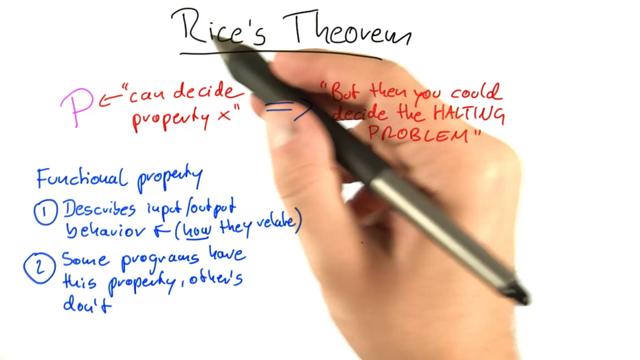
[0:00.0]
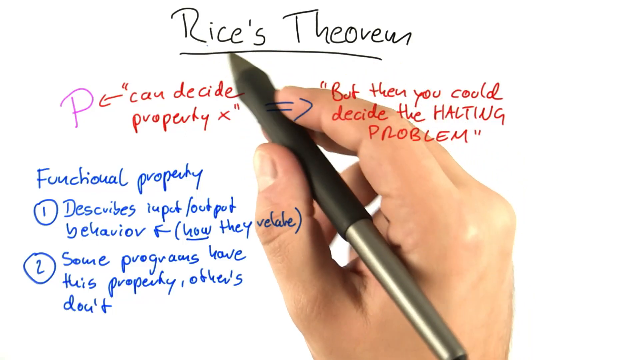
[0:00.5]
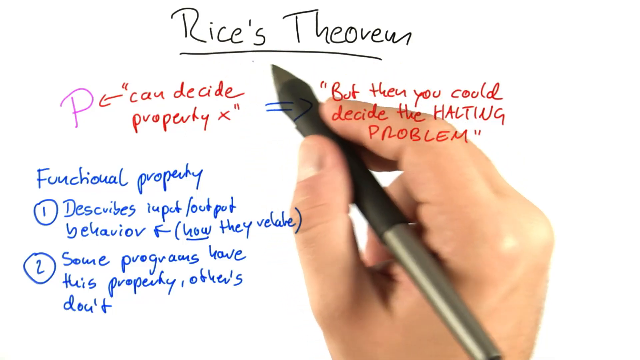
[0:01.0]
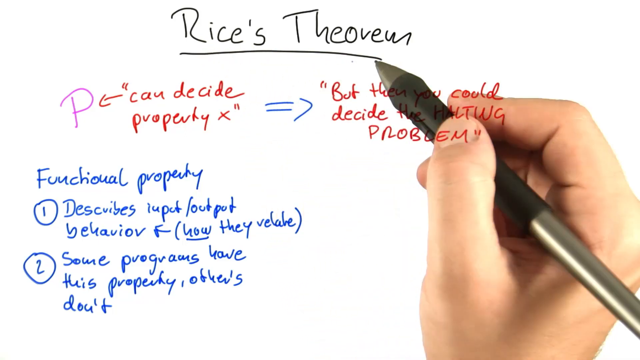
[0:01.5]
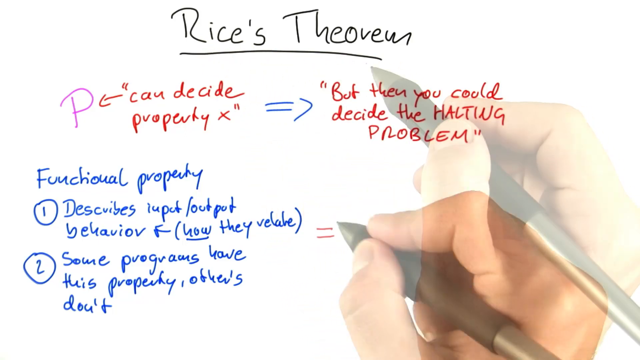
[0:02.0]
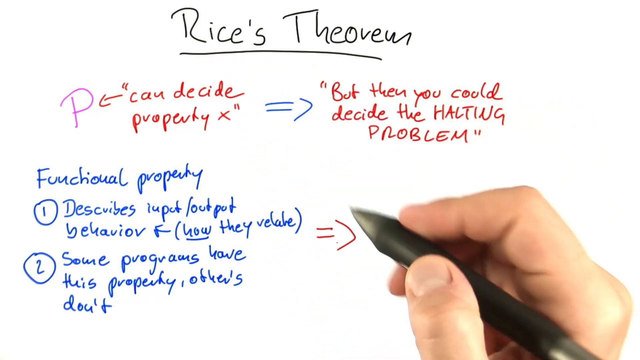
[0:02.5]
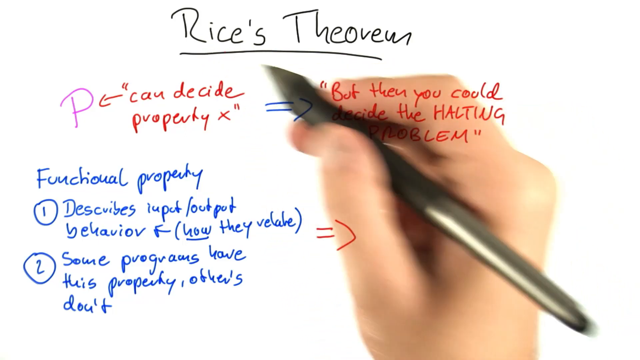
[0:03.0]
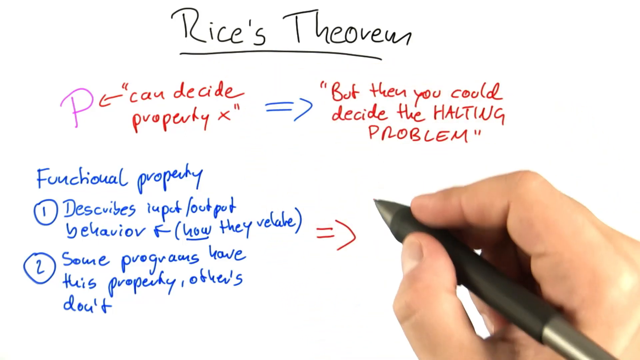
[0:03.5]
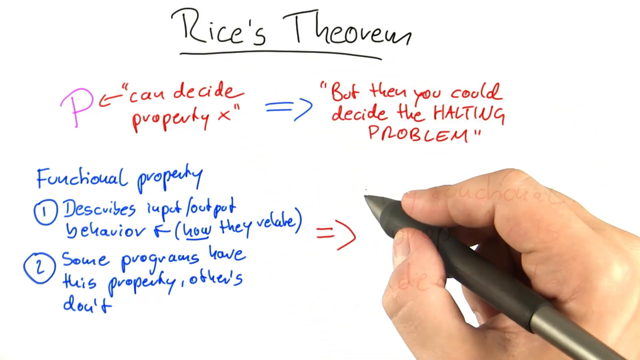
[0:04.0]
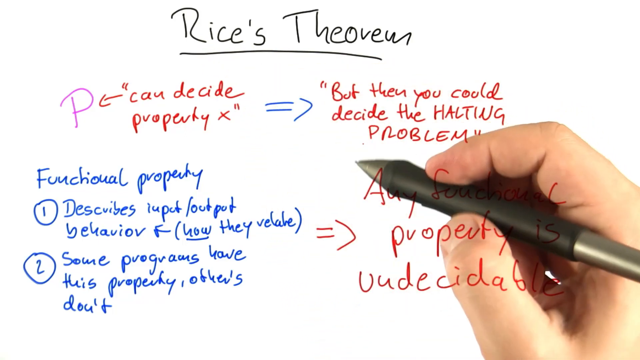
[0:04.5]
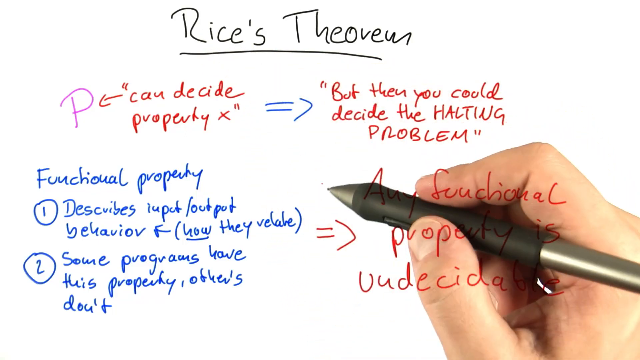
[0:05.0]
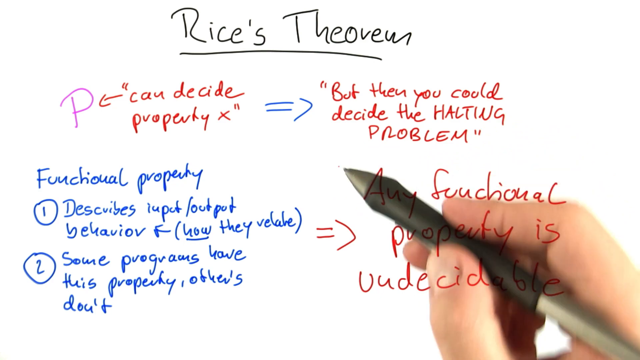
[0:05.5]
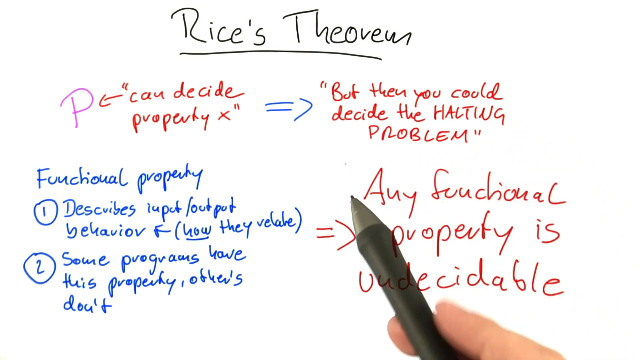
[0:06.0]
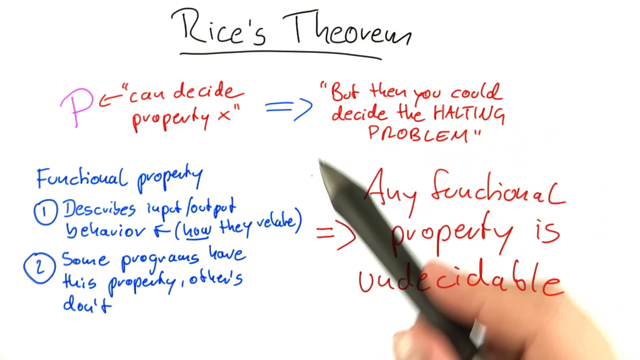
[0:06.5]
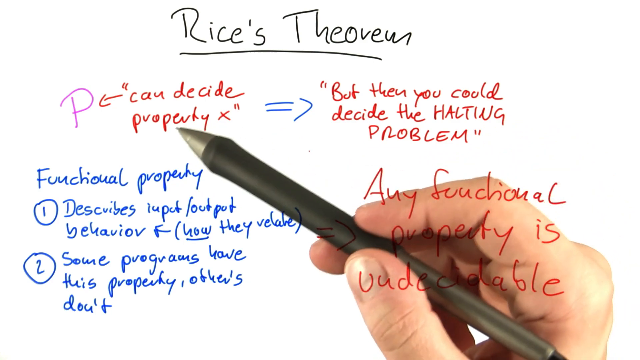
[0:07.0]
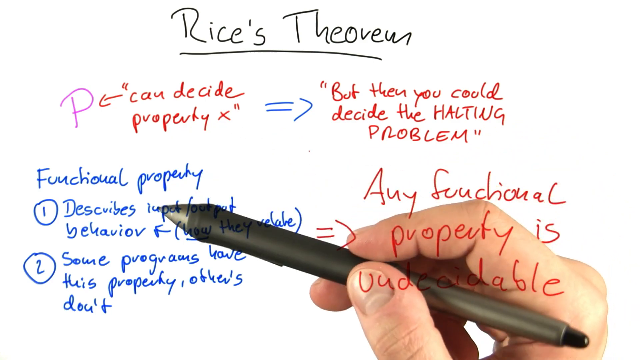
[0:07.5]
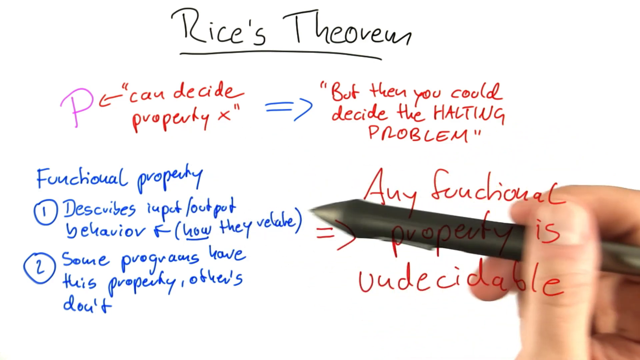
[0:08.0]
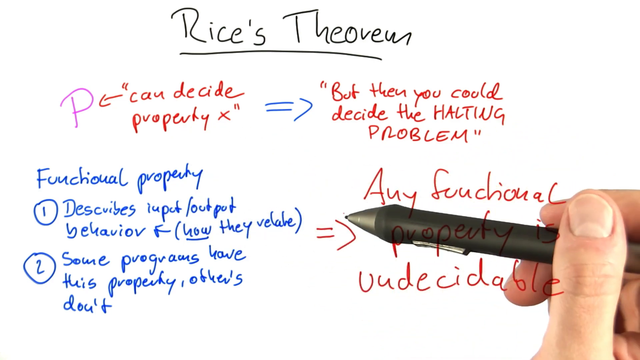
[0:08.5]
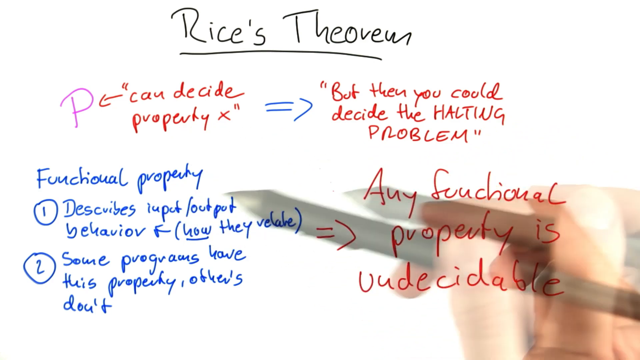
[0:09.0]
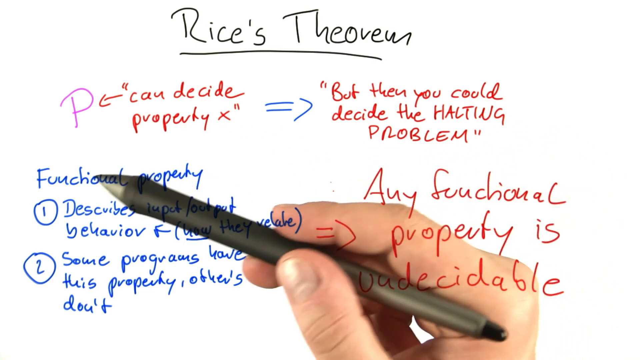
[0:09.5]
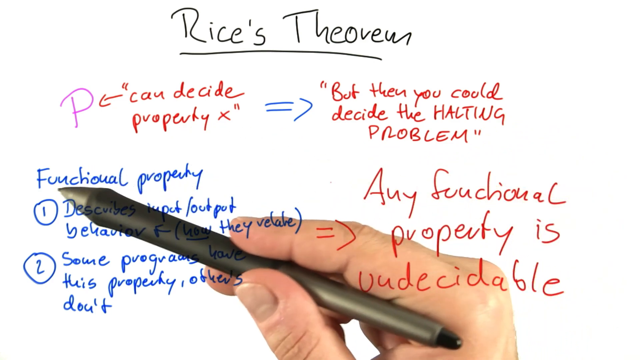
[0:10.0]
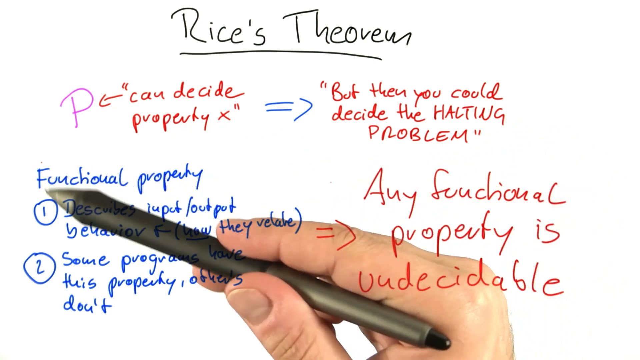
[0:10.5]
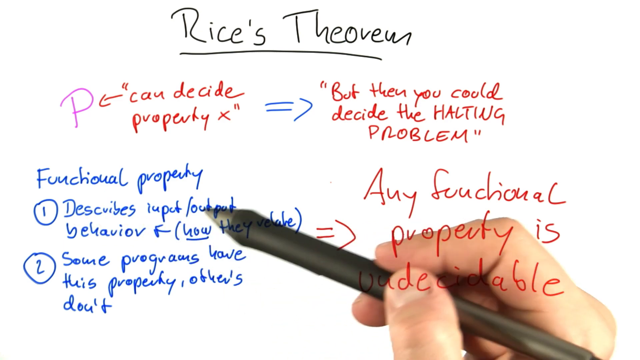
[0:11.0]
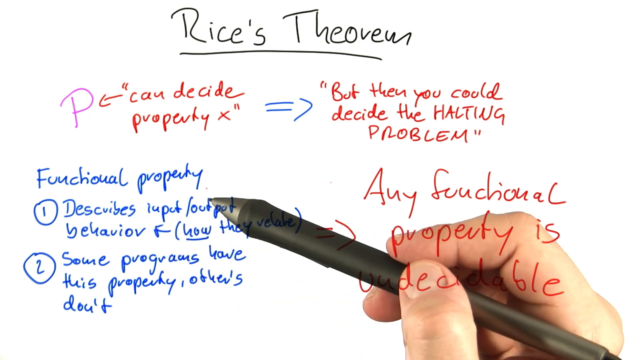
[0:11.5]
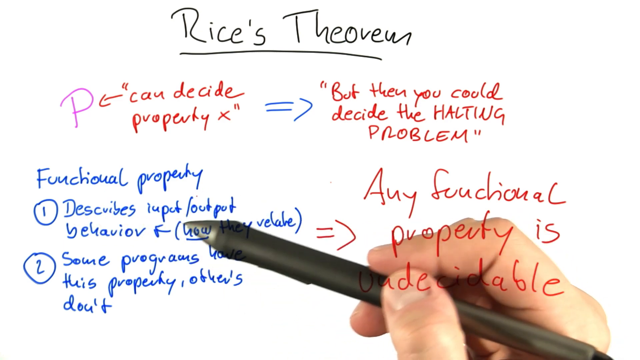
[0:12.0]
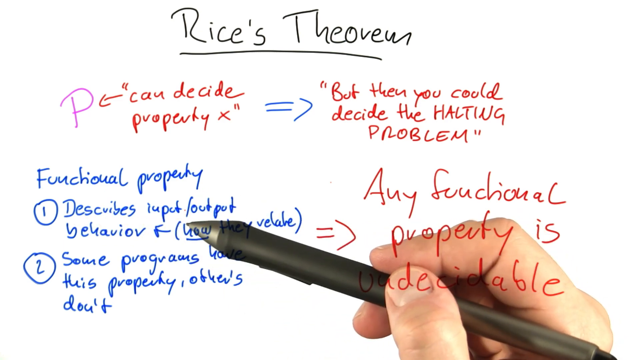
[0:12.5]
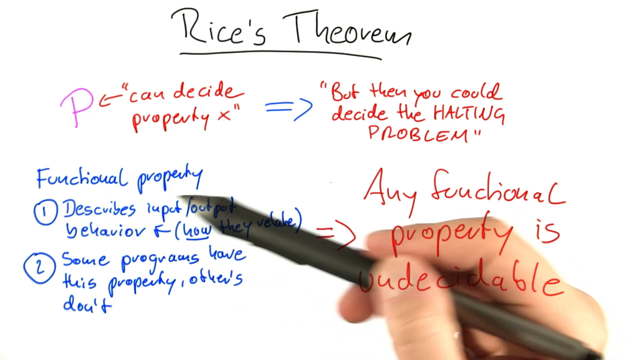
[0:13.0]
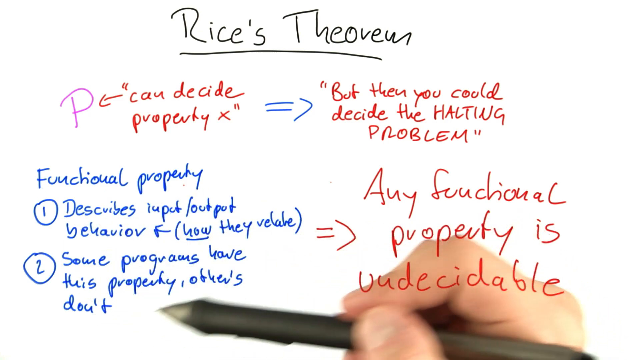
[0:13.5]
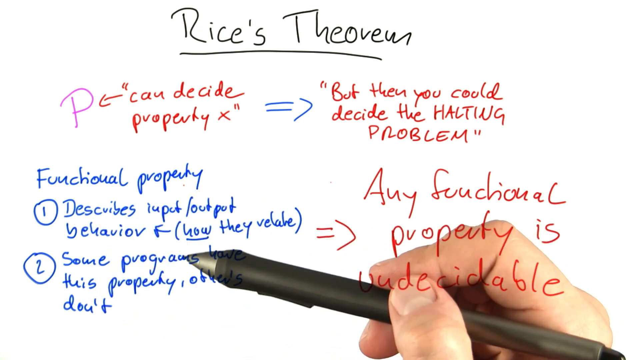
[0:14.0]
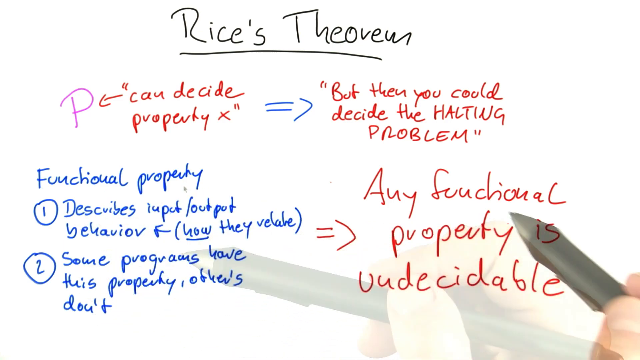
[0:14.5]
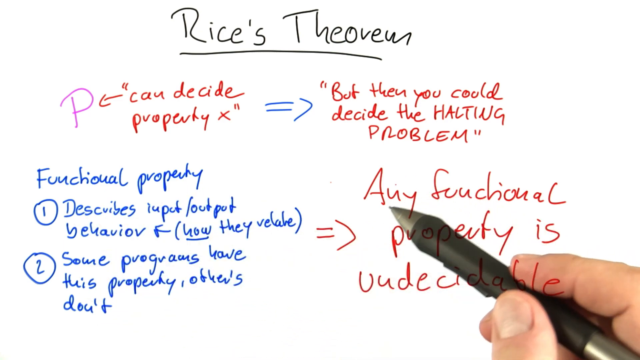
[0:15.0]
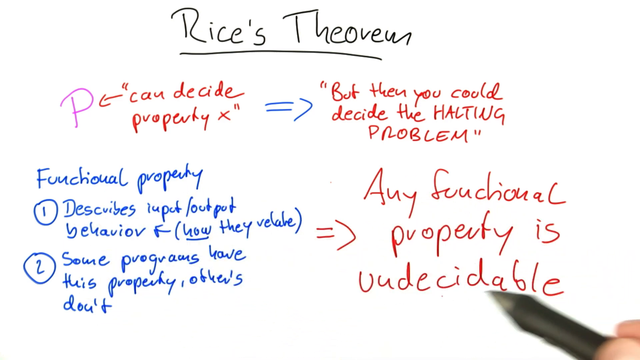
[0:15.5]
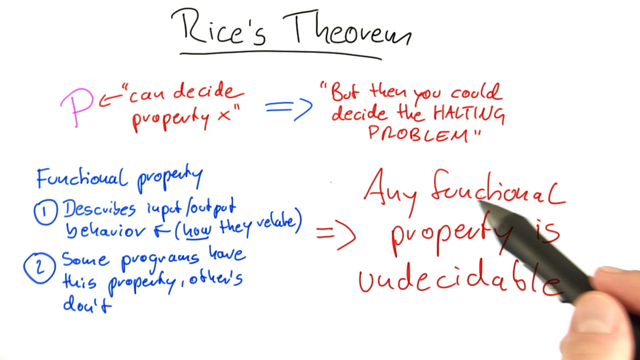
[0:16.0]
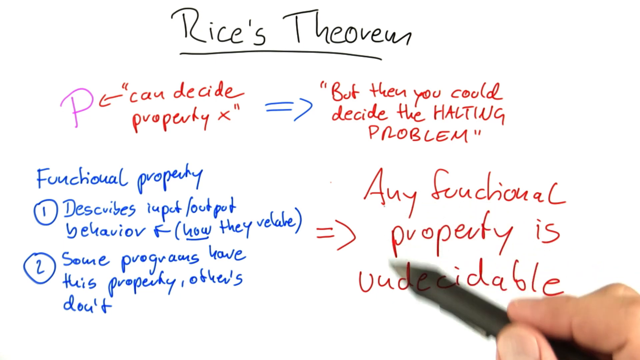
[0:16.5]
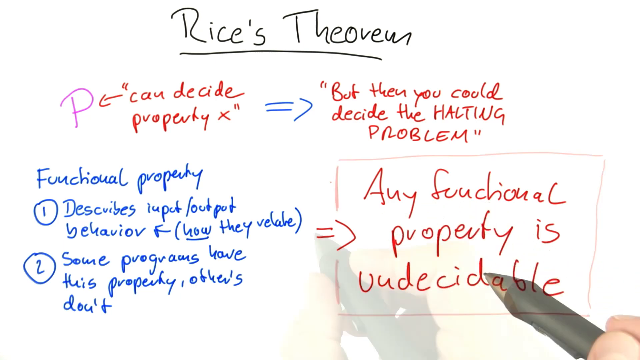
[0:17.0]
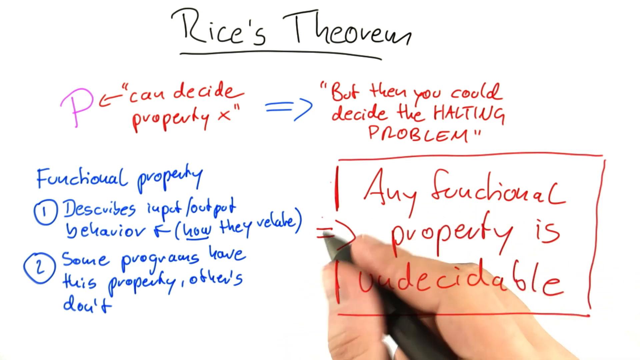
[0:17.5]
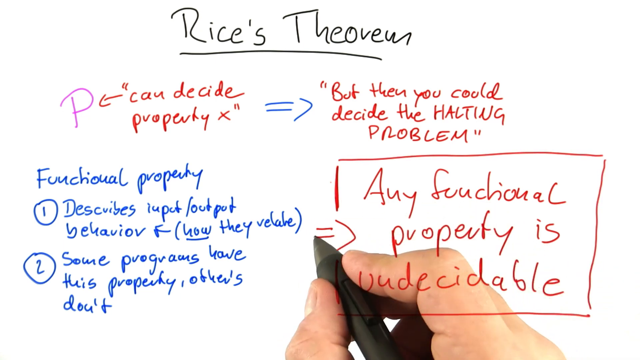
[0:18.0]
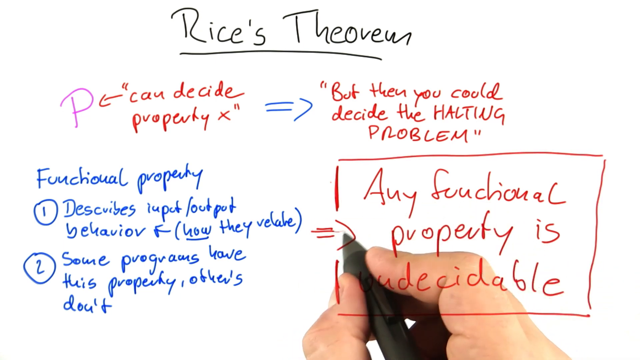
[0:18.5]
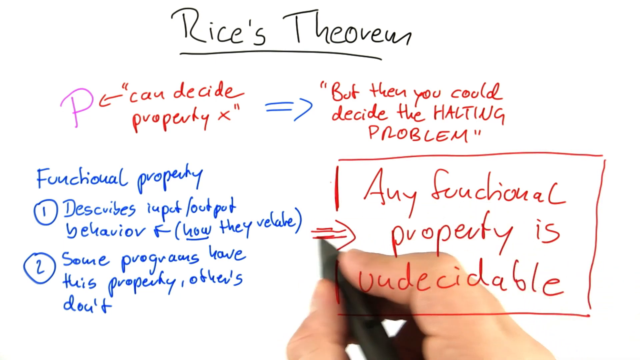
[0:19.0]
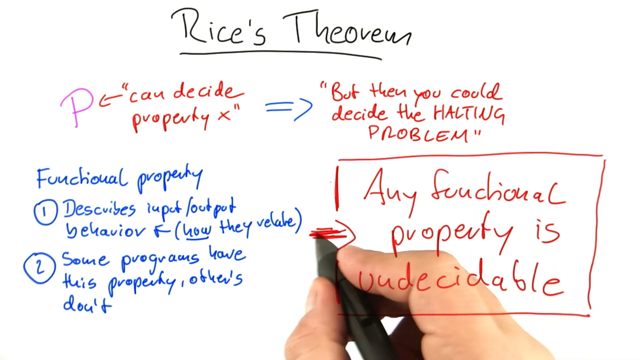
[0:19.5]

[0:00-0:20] A person's hand holds a pen over a white background covered in text in black, red, blue and purple, including "Rice's Theorem." There is a P with a red arrow and red text in quotation marks that says "can decide property x," and a small blue arrow points to red text in quotation marks that says "but then you could decide the halting problem." Blue text reads "functional property 1 describes input output behavior how they relate and 2 some programs have this property others don't." The hand moves, then writes a red arrow and the words "any functional property is undecidable." The hand moves around, points at some of the blue text and then at some of the red text. A red box is drawn around some of the text, followed by more scribbled red lines.